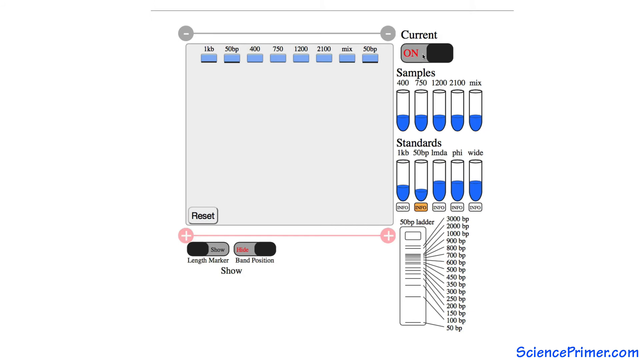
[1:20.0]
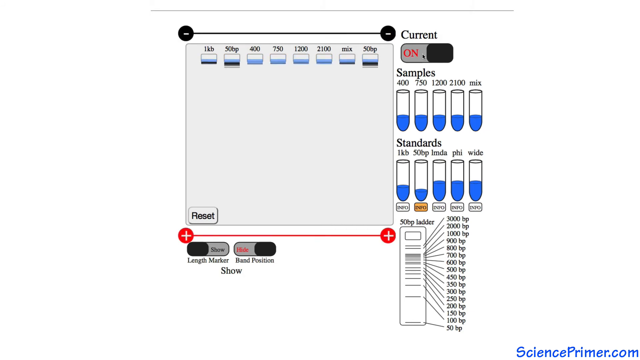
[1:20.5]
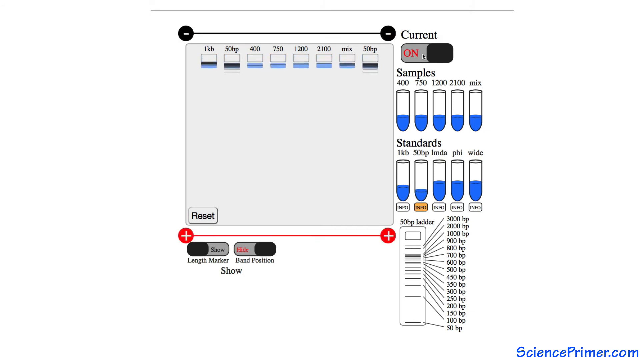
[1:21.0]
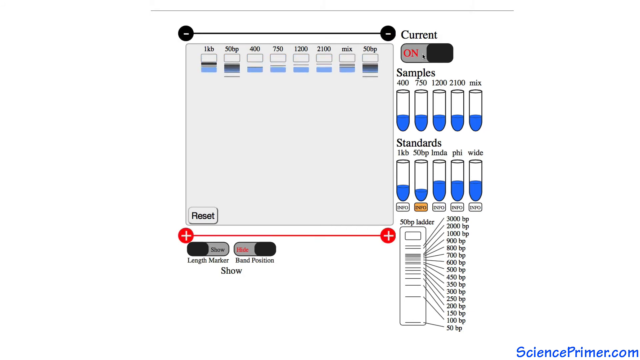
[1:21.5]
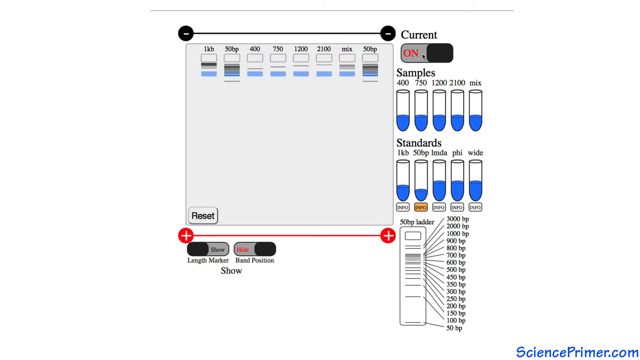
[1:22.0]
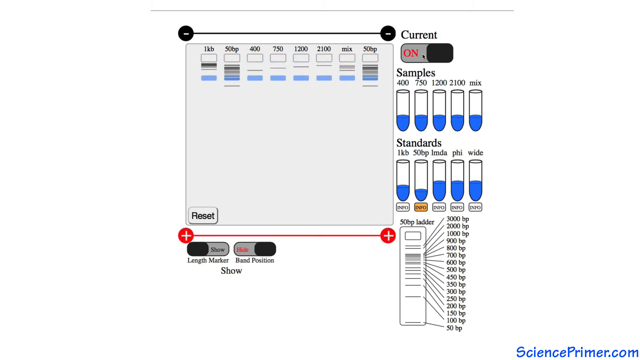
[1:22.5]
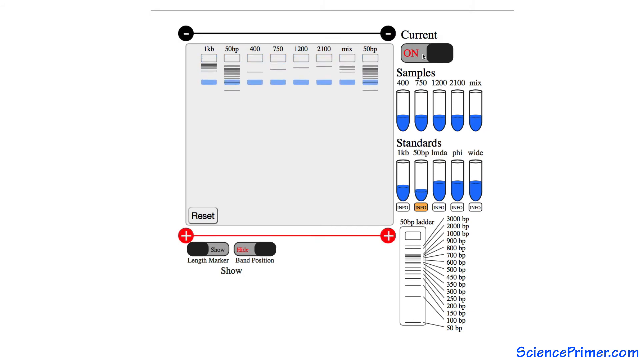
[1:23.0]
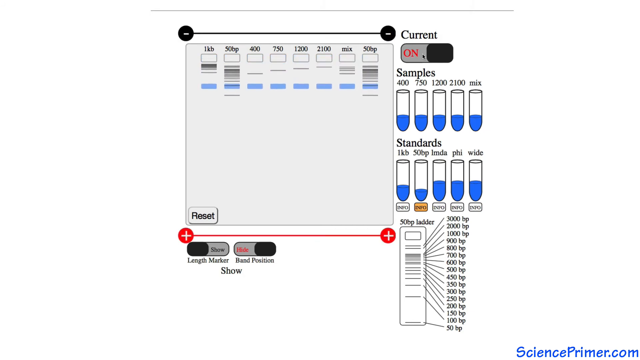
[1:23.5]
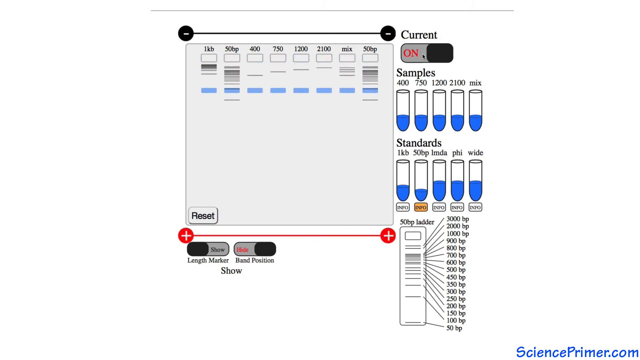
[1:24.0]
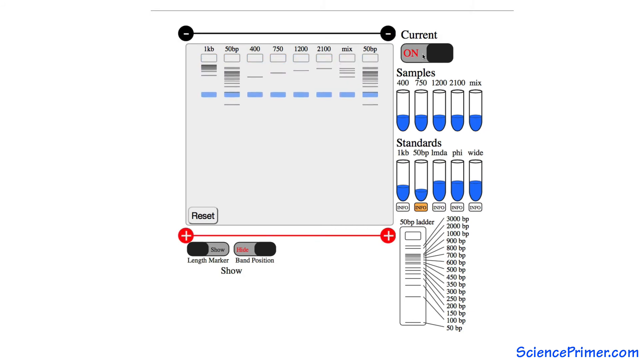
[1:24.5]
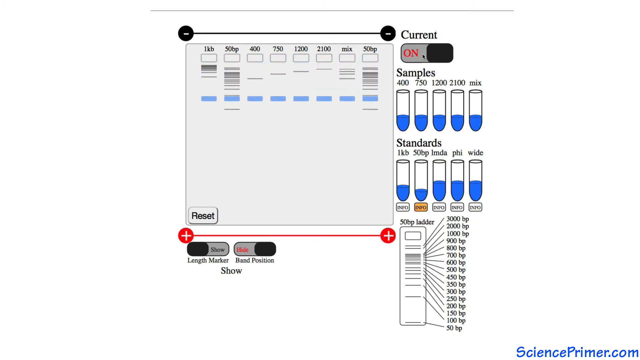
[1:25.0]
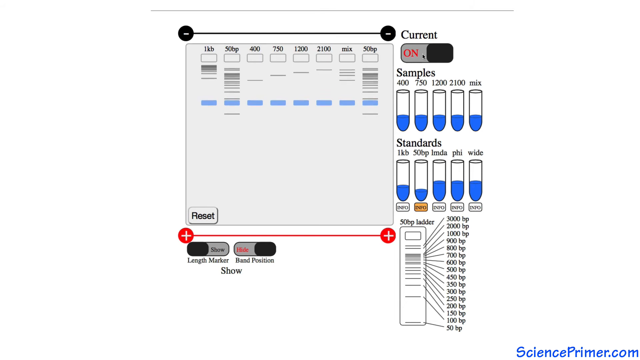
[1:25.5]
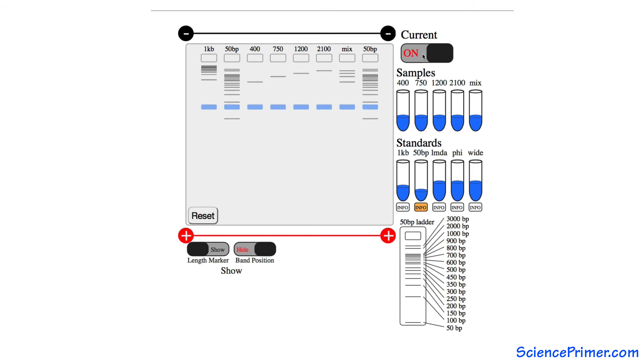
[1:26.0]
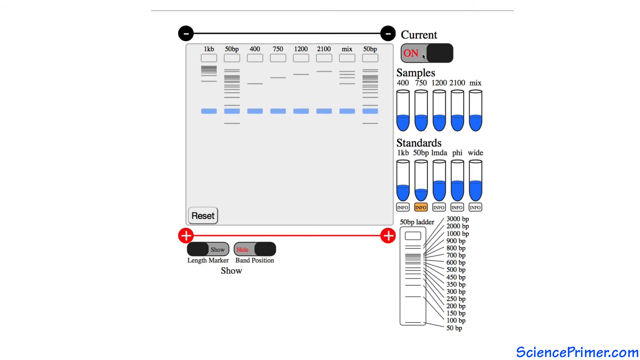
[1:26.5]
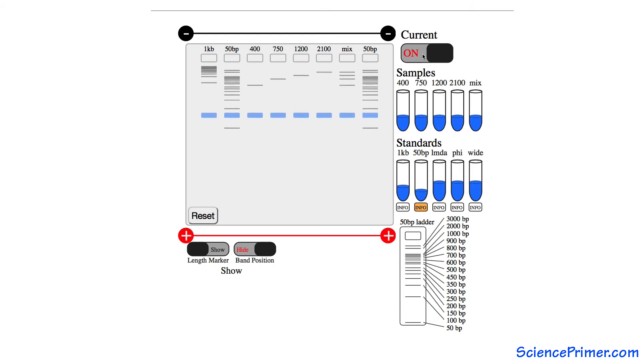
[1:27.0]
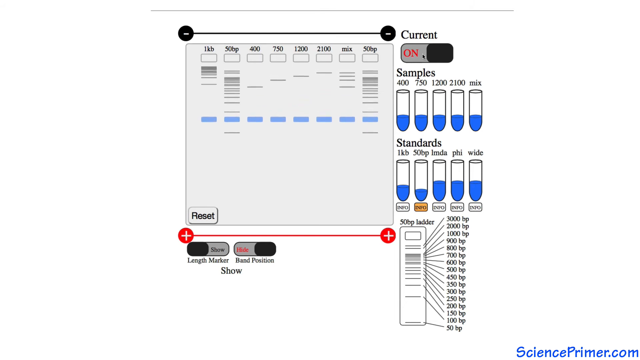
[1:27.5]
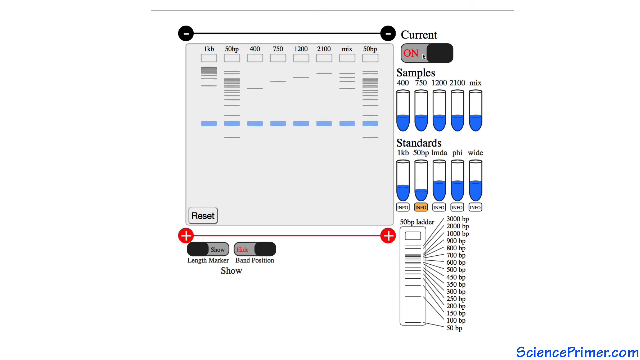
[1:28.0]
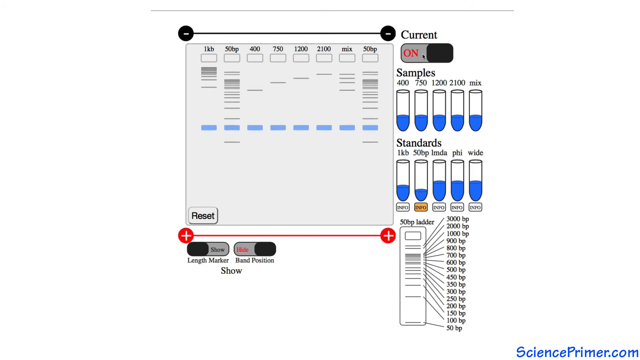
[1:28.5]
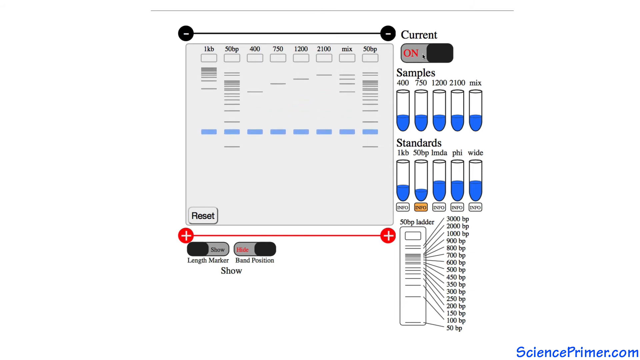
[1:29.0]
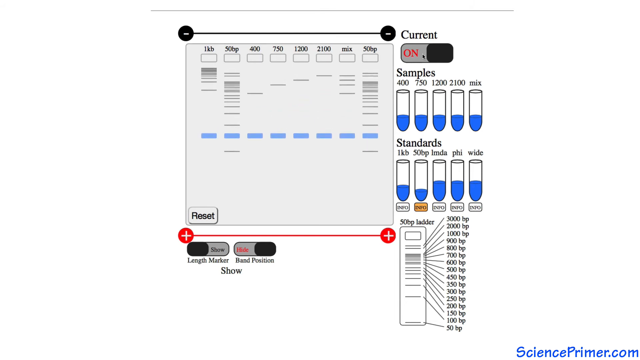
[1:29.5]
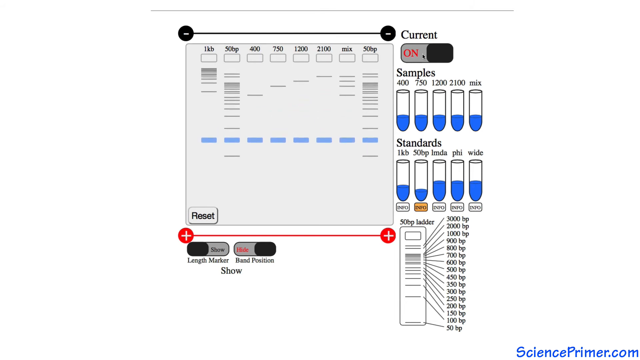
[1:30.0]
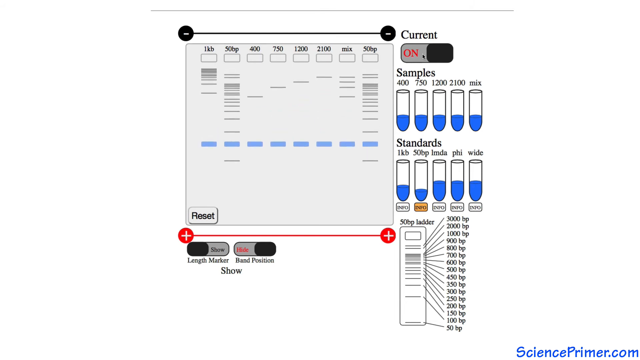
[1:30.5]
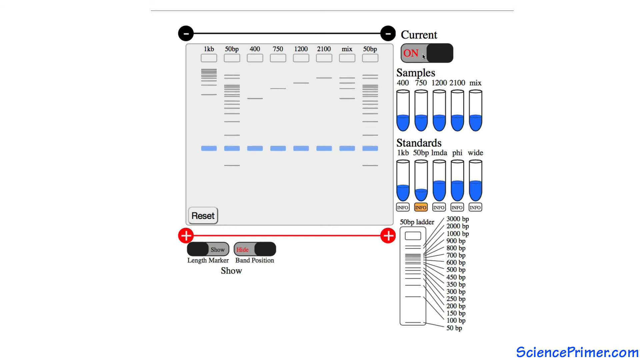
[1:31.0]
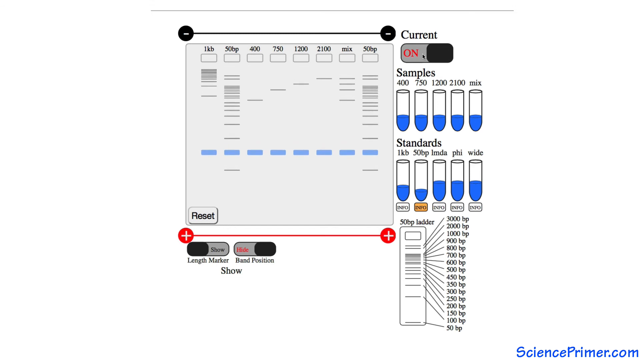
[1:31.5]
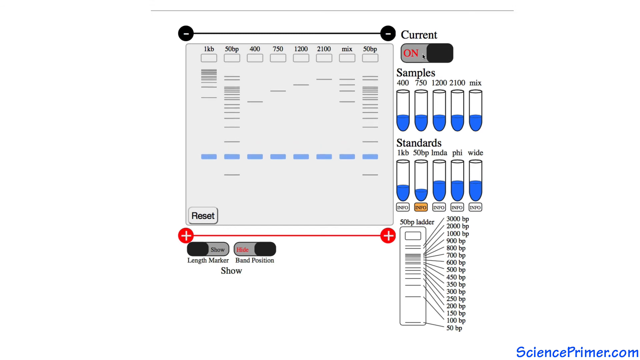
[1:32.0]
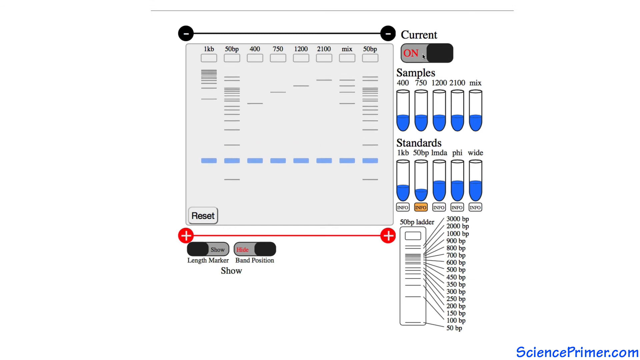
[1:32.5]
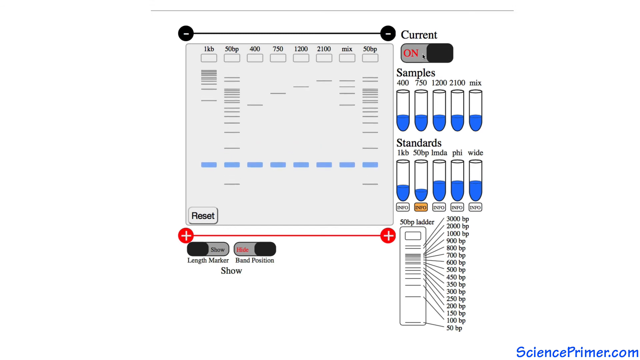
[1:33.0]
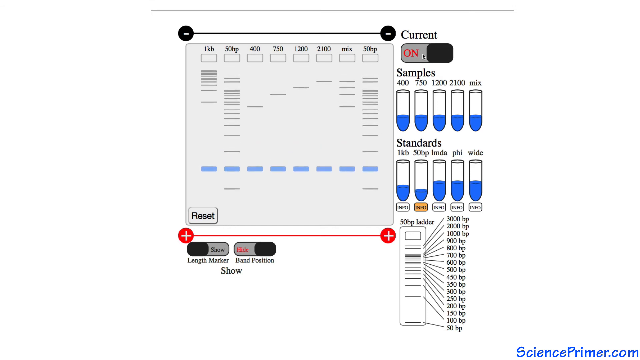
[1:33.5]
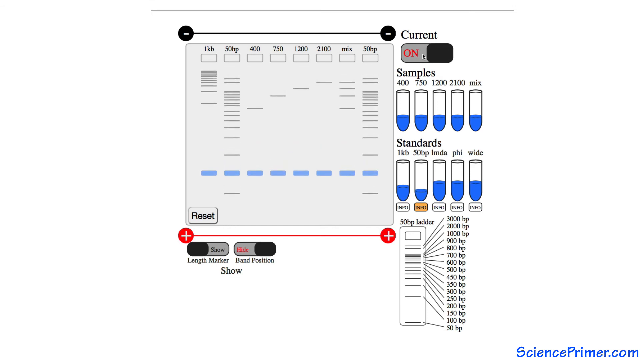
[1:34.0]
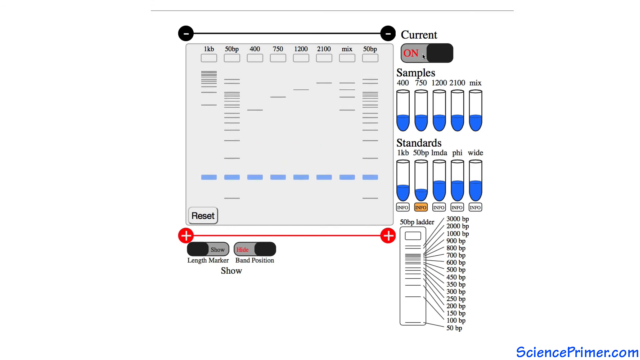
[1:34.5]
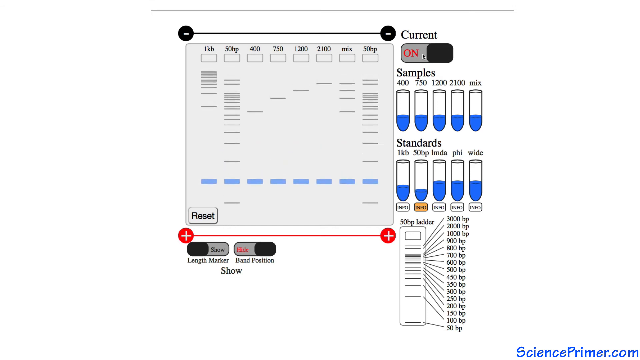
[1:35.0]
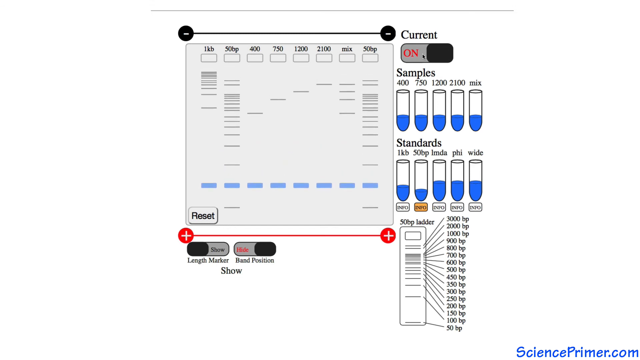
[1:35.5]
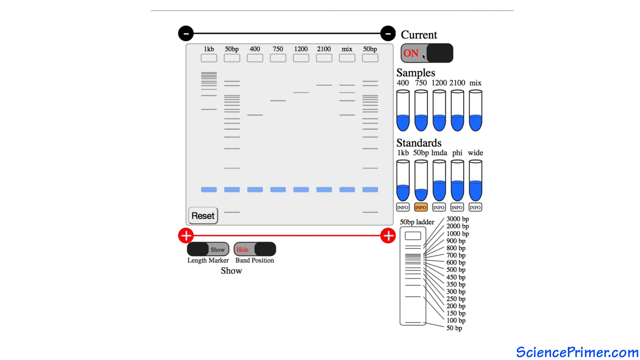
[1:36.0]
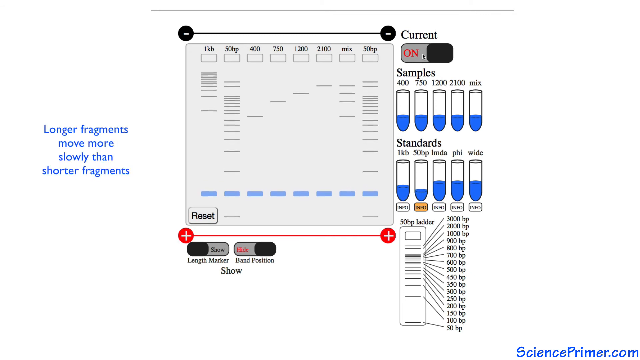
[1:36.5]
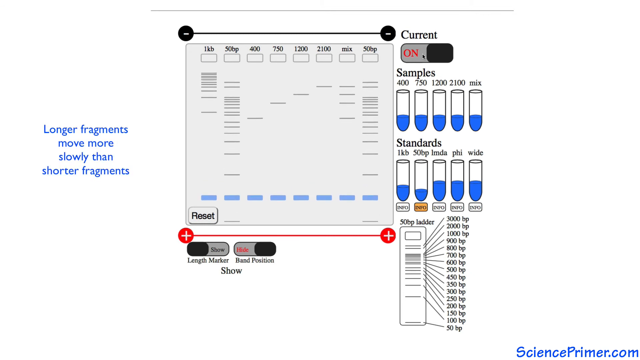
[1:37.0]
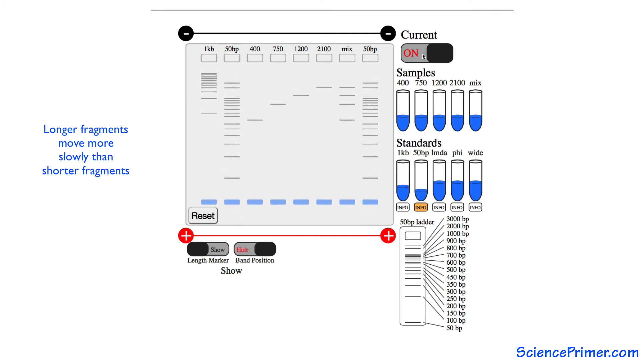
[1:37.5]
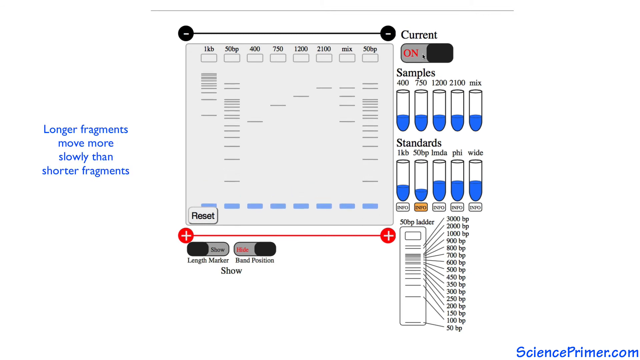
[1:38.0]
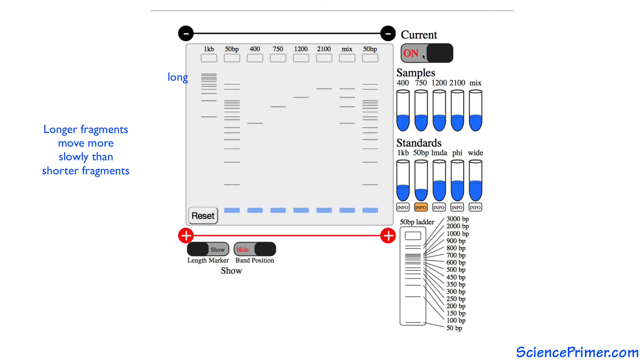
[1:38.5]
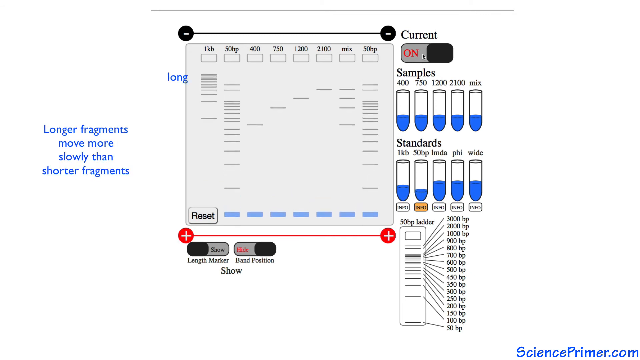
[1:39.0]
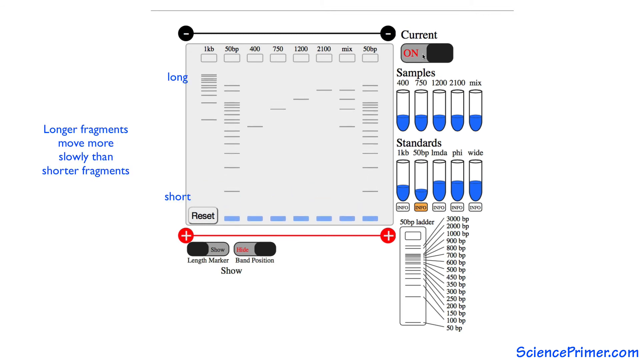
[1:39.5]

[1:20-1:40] A rectangle at the bottom of the second row of test tubes is labeled with different black lines, each with a different number and the measurement "BP" next to it. Each of the test tubes has had liquid removed and put into the wells at the top of the gray rectangle. Underneath the gray rectangle is a red line with two plus signs in red circles on either side. An animation starts, showing the liquid coming out of the wells into blue and gray lines, some thicker than others. All of the blue lines are together in one row. The lines expand and reach the bottom while a caption moves on the left side. The caption is written in blue and says "longer fragments move more slowly than shorter fragments."